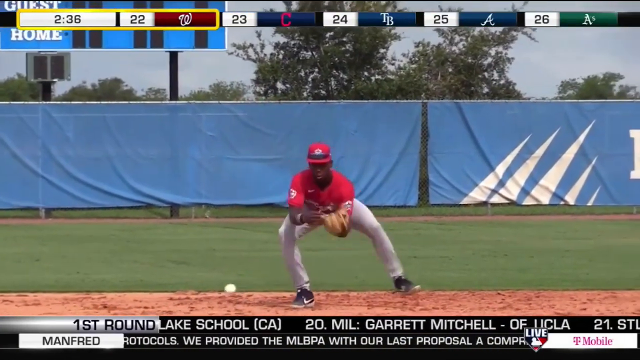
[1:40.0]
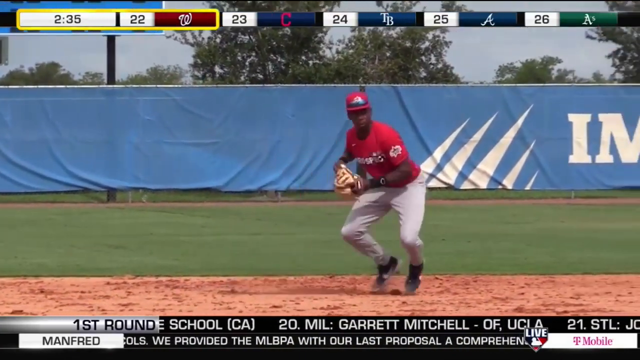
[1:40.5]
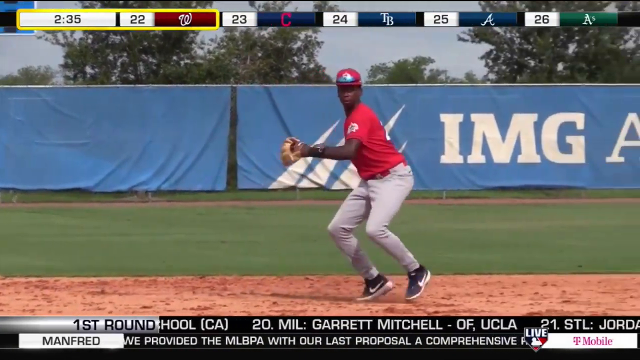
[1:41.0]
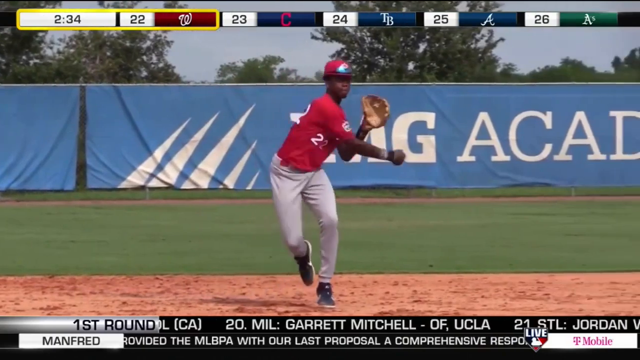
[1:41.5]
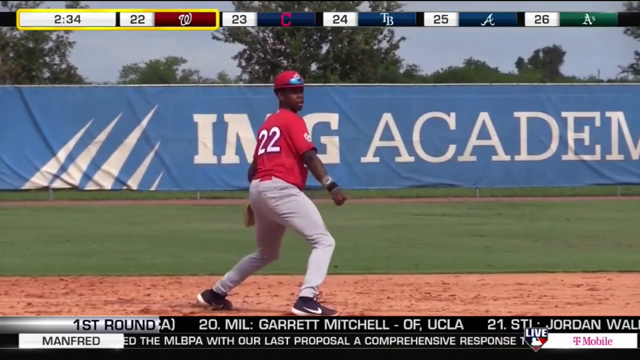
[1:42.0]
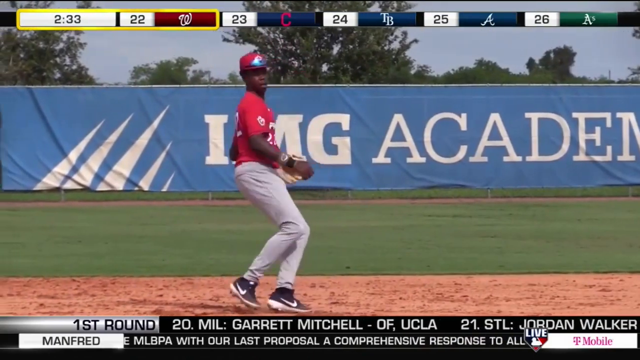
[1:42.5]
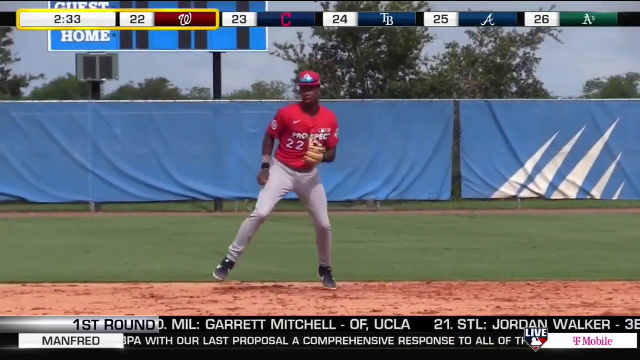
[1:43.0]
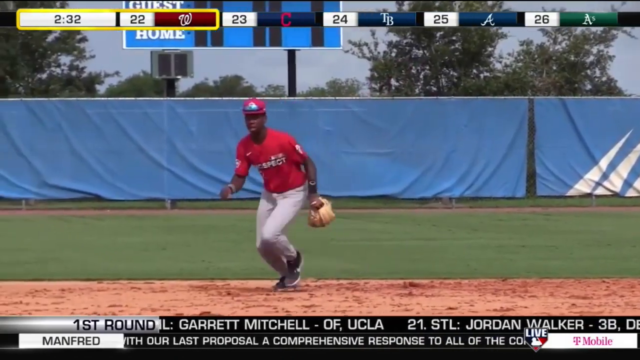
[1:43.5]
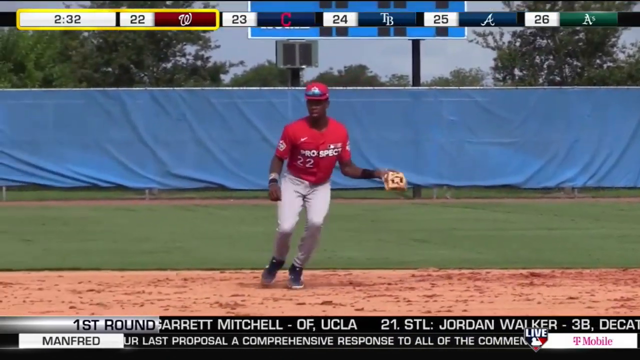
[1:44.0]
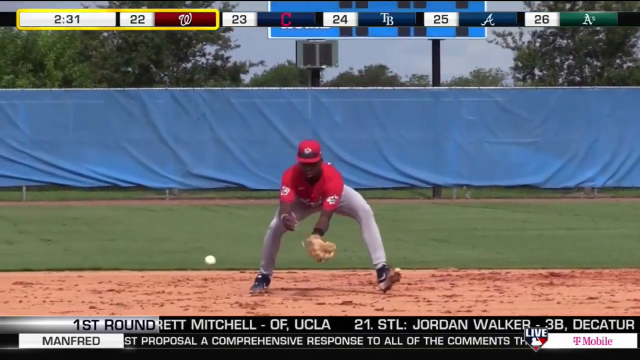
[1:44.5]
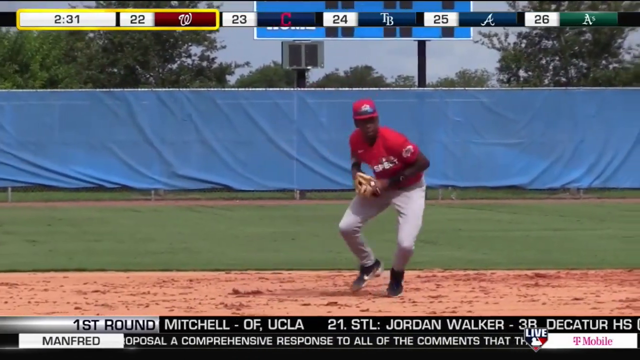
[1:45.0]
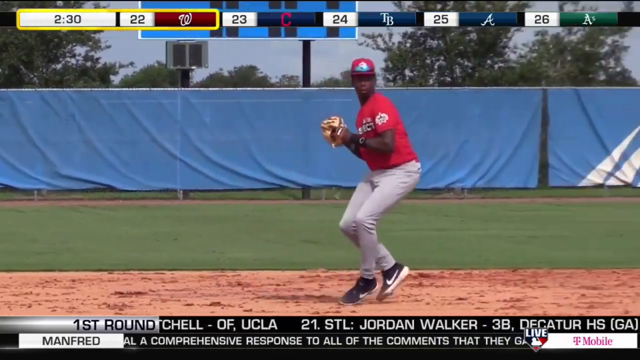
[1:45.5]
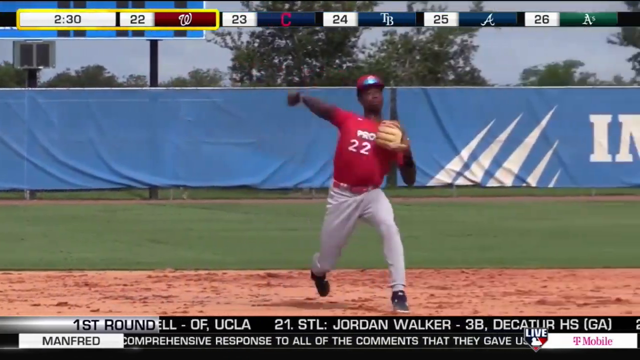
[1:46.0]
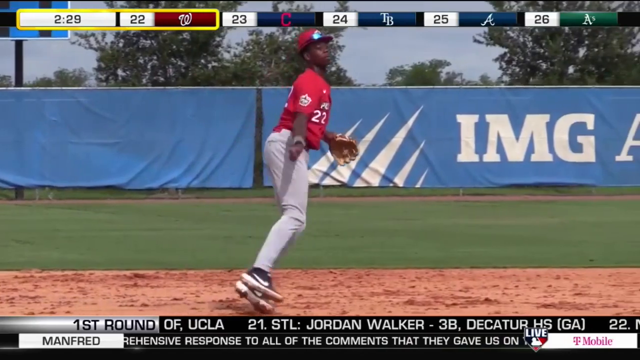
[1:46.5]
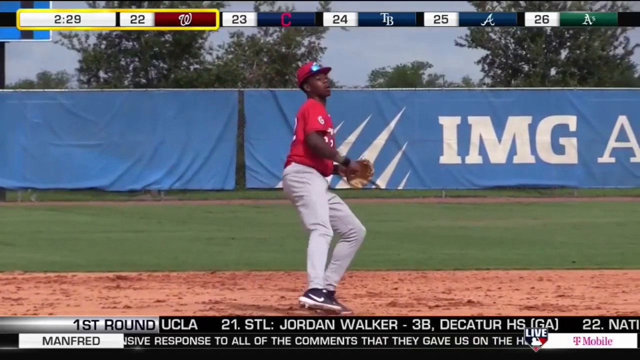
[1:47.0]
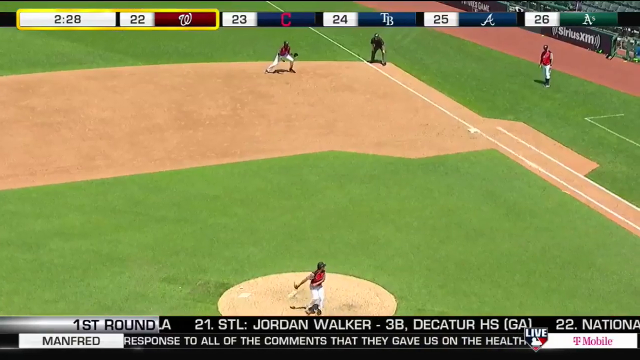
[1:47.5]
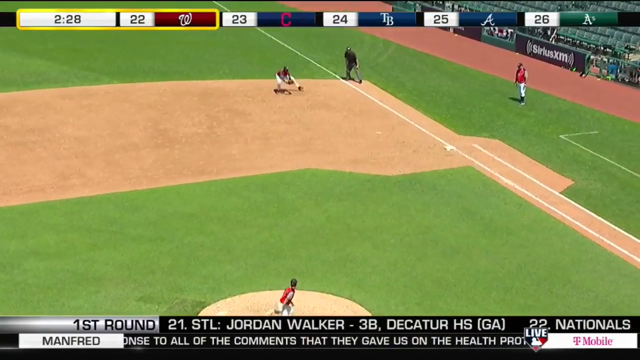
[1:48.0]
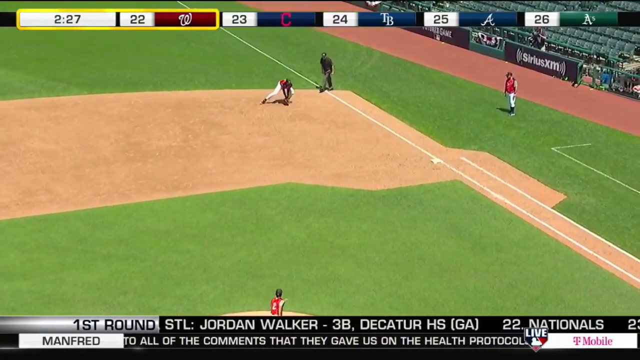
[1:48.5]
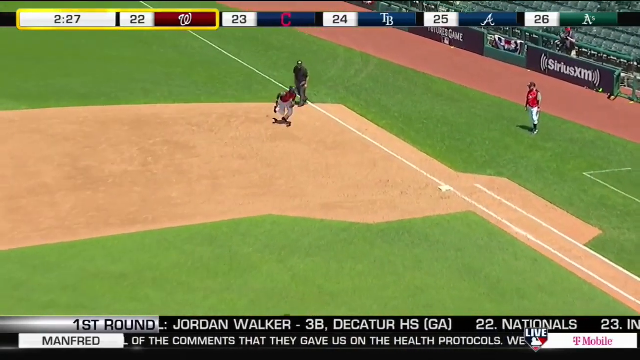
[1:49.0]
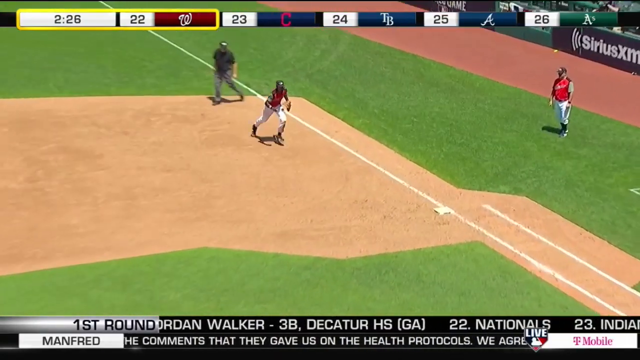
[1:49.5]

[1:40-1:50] Walker is in the field. A ground ball is hit to him; he scoops it up in the mitt on his left hand, transfers the ball to his right hand, takes a hopping step or two, and throws to first. The same thing happens again: he scoops up a ground ball, transfers it to his hand, and this time takes a large step and a couple of hopping steps before making the play to first. Another view shows him playing first base significantly behind the bag, at the back edge of the dirt near the umpire. A ball is hit to him, and he scoops it up, runs to first base and makes the out.